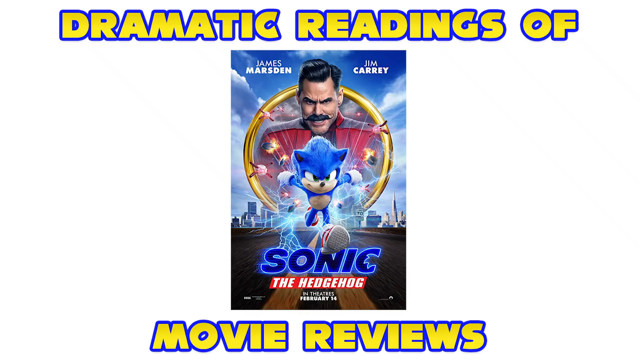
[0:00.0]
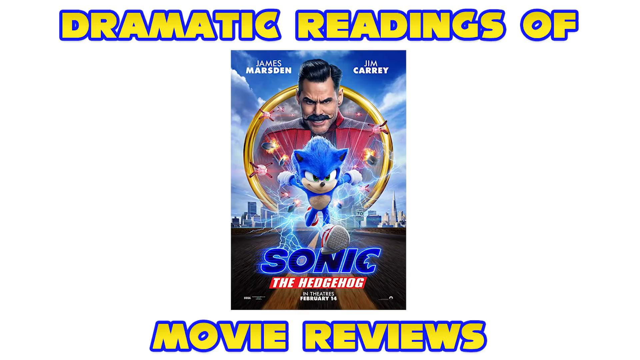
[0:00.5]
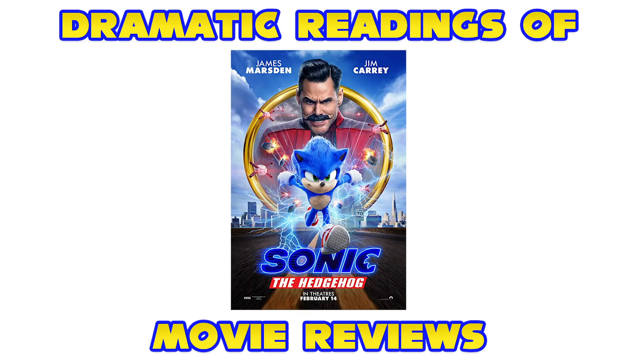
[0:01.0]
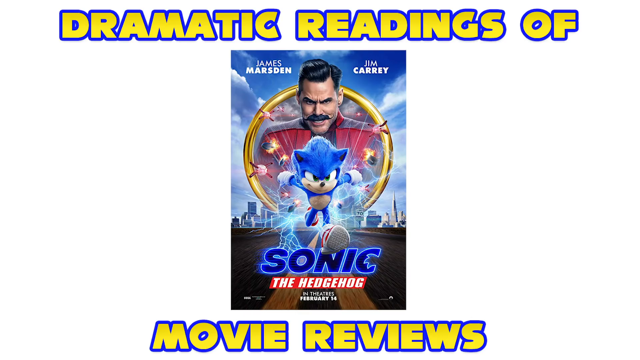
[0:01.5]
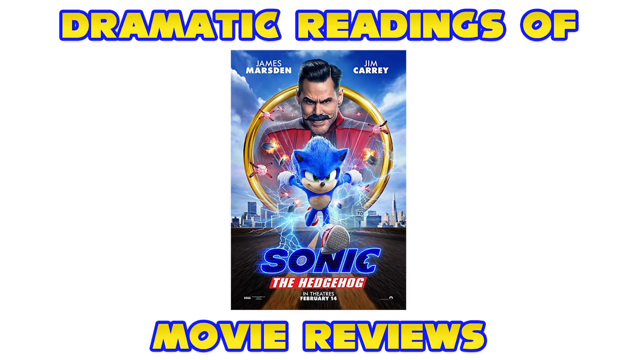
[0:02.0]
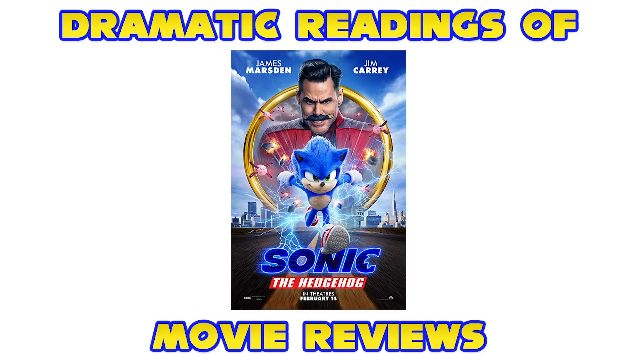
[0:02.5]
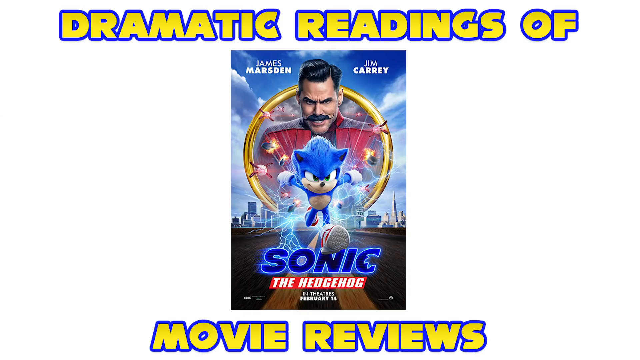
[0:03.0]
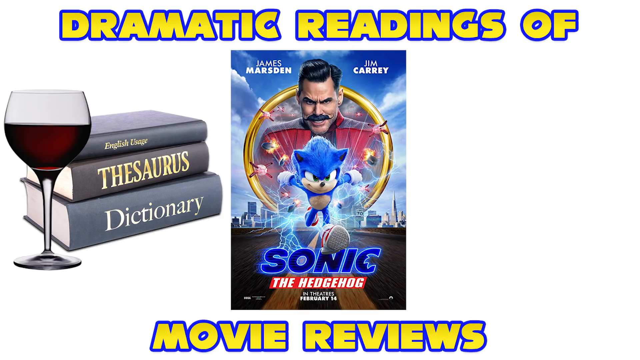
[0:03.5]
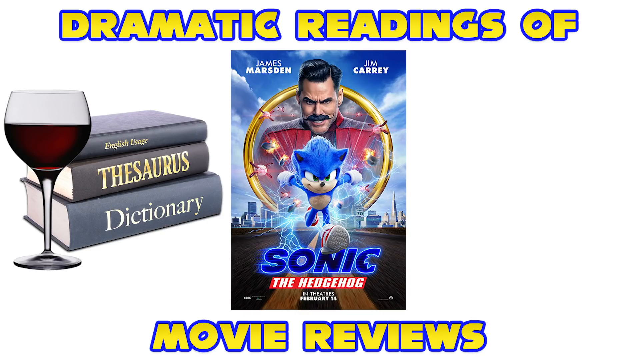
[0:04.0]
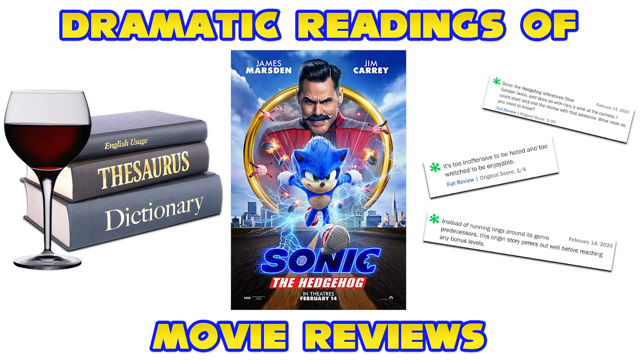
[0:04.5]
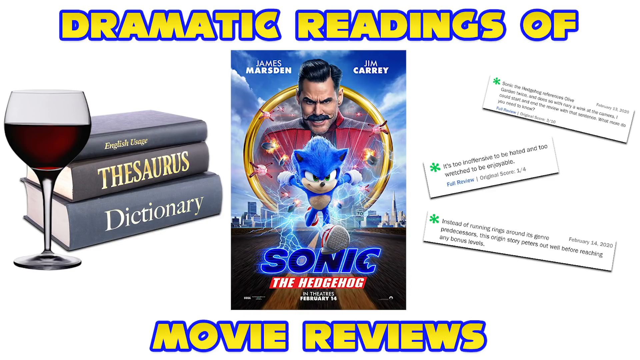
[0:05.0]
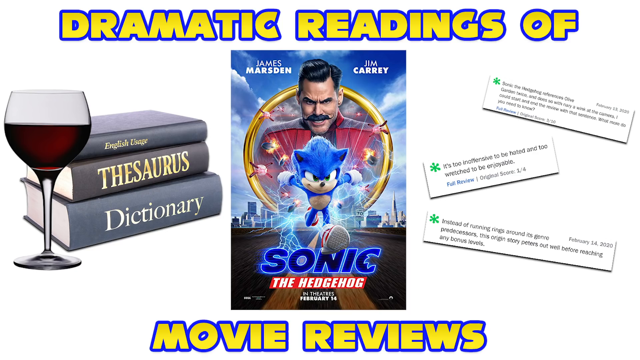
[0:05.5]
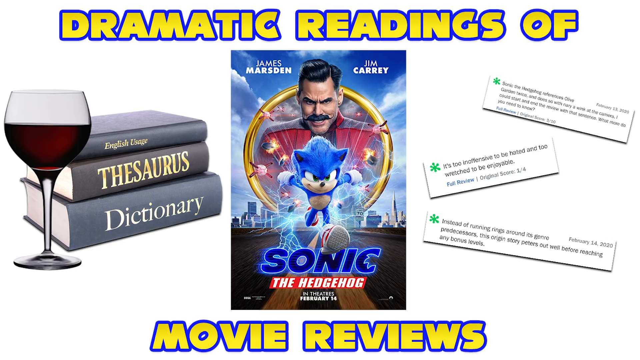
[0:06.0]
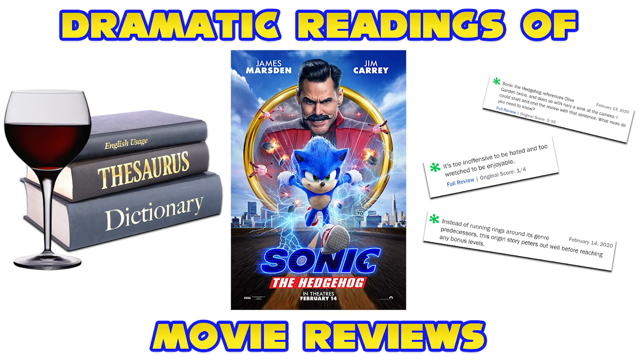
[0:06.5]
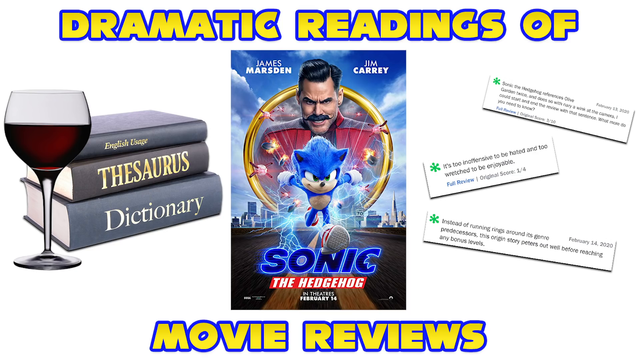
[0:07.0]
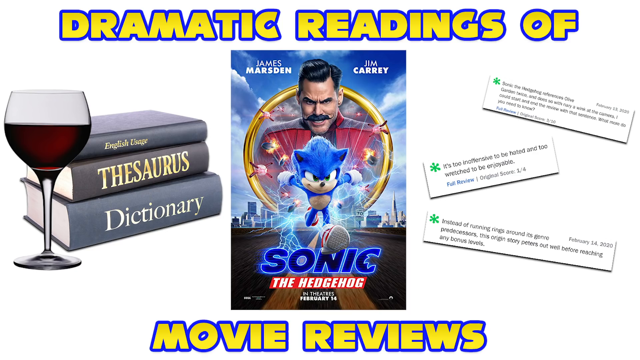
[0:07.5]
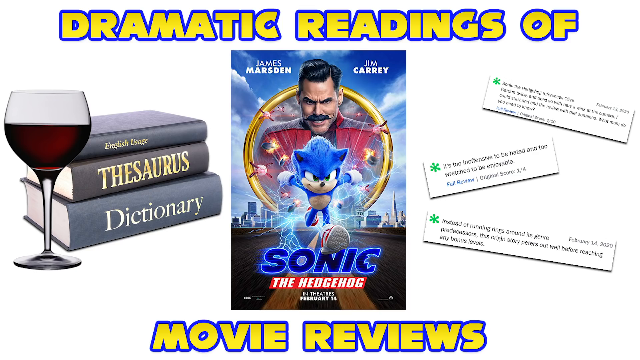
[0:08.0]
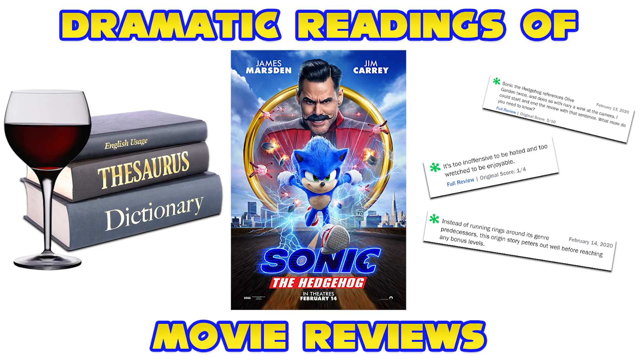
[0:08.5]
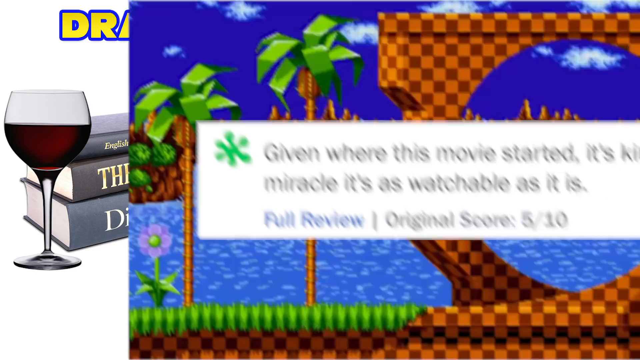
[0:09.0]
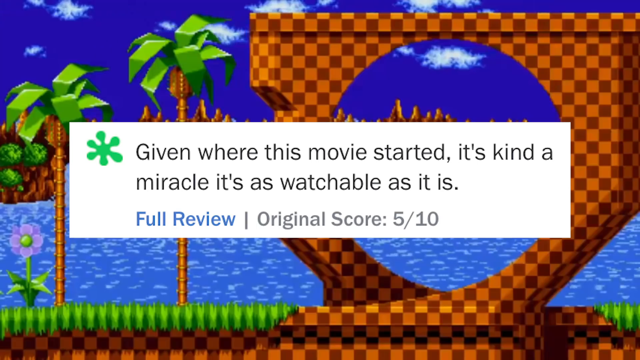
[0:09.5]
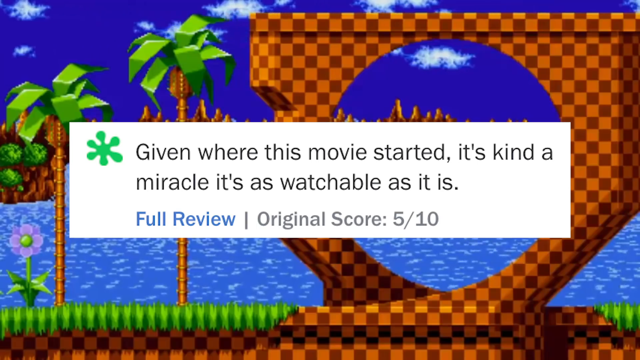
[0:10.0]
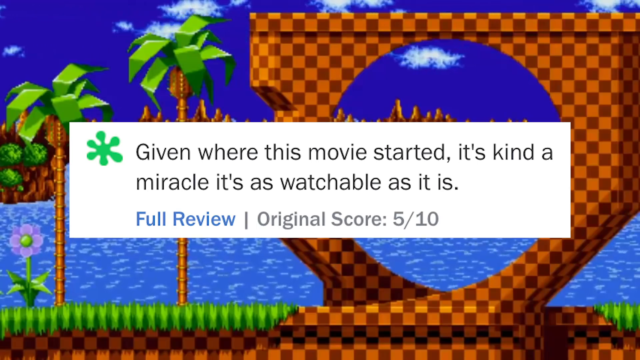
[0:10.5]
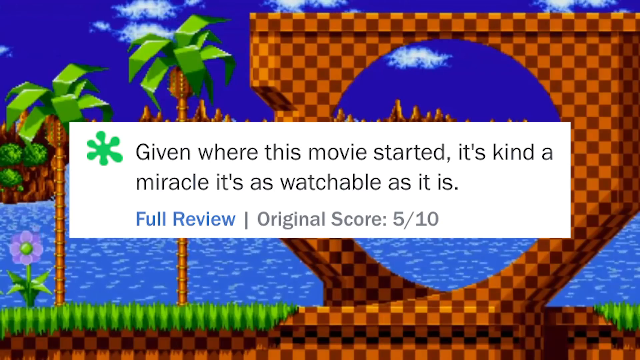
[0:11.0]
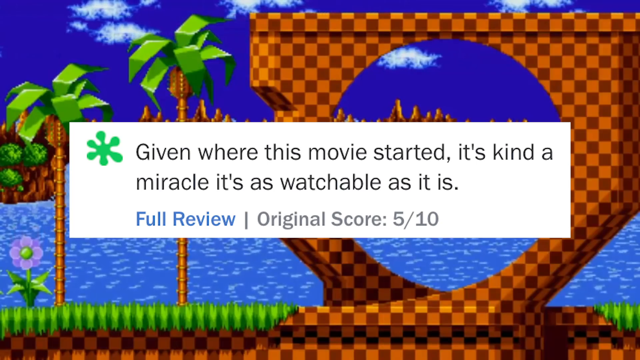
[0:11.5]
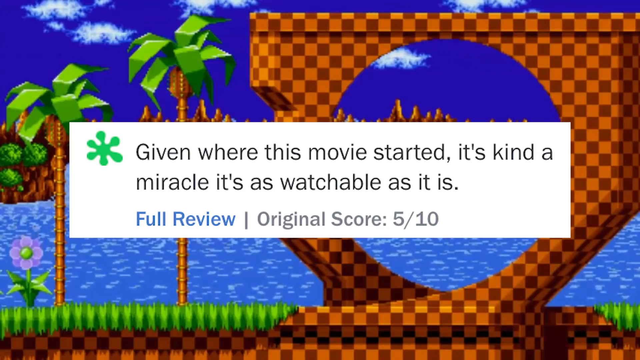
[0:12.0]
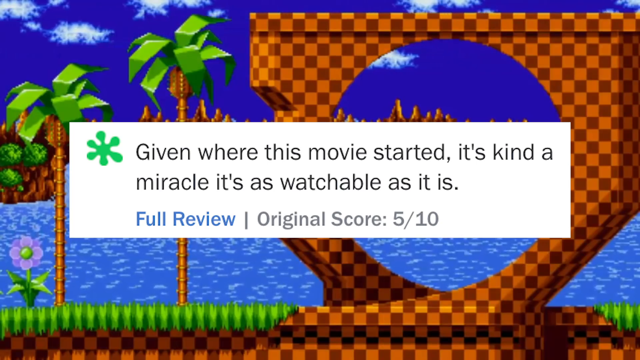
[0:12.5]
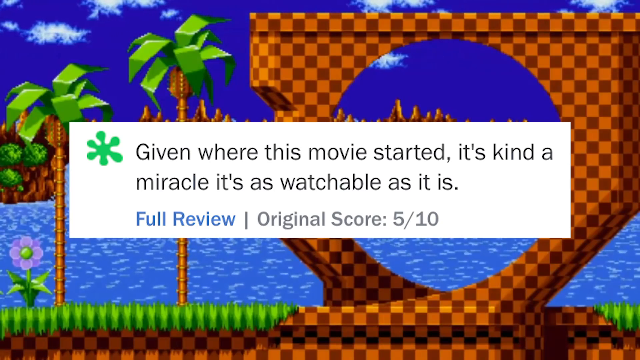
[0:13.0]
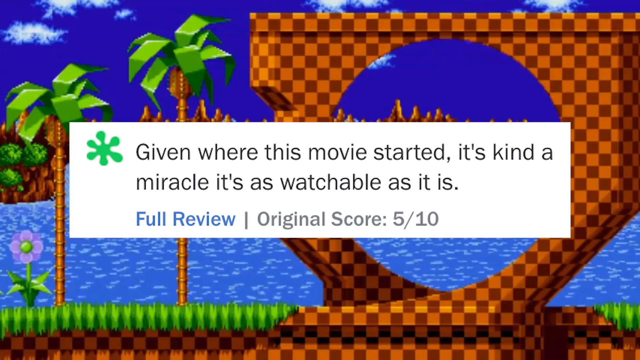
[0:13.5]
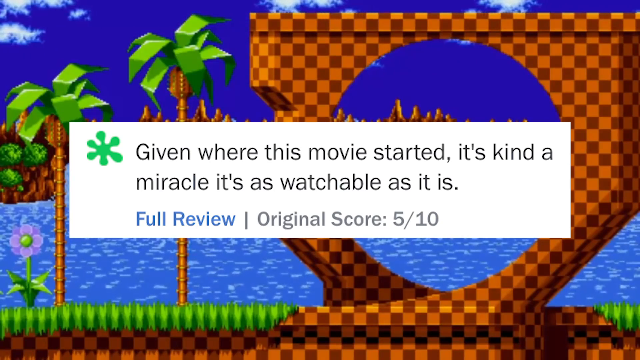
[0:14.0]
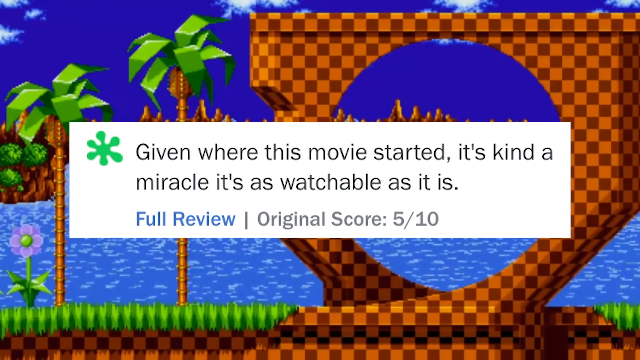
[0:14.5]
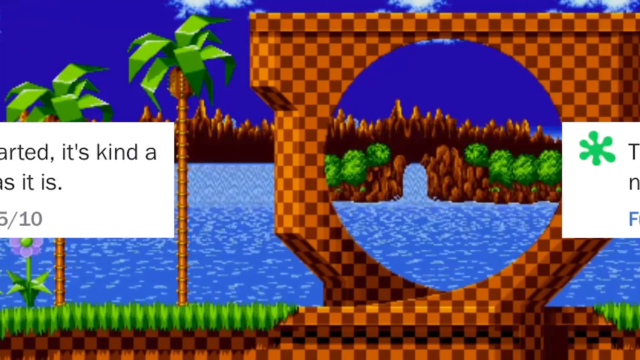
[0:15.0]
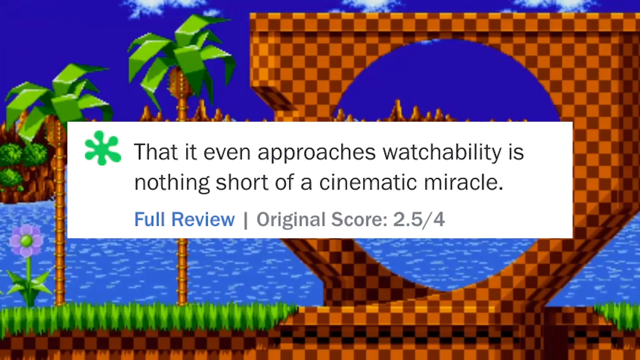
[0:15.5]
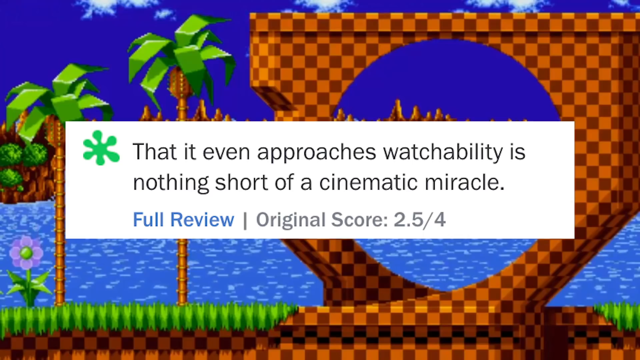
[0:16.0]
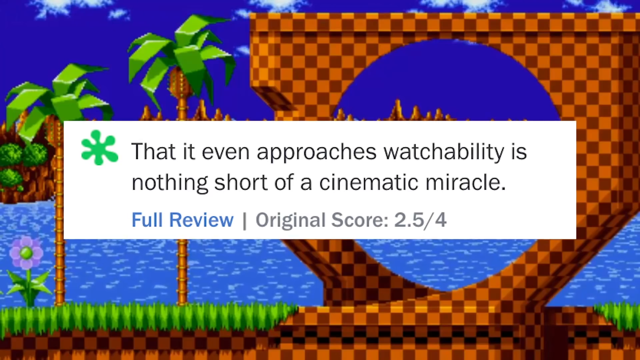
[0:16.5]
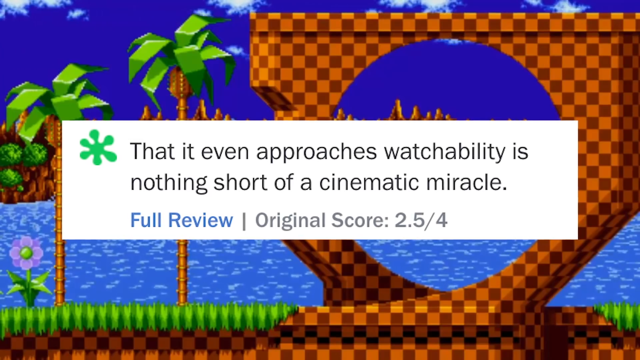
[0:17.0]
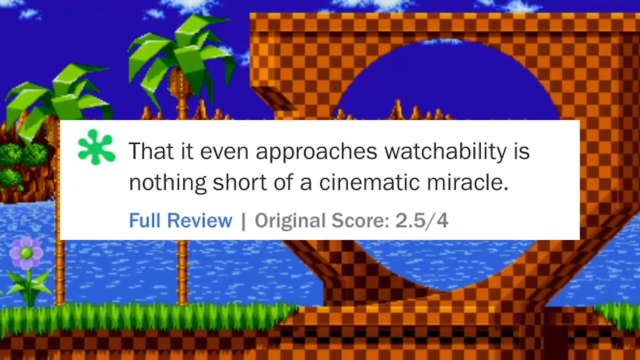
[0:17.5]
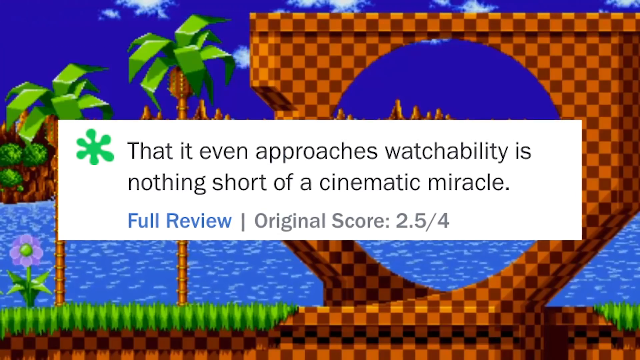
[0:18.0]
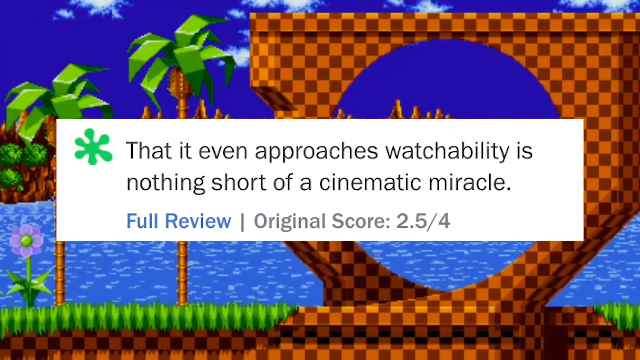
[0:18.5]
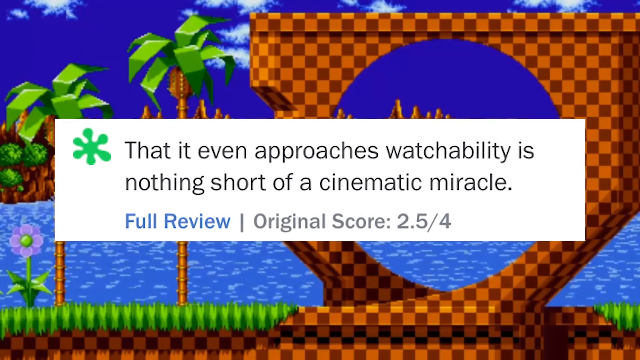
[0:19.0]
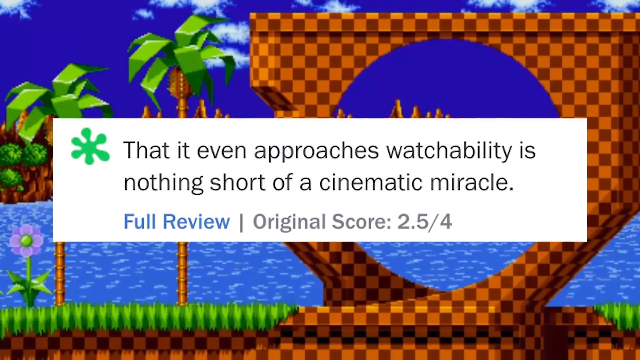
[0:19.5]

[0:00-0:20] The video is titled Dramatic Readings of Movie Reviews and looks at Sonic the Hedgehog, starring James Marsden and Jim Carrey. It opens on an image of the main movie poster, which shows Sonic the Hedgehog, a blue creature, running along a highway with Jim Carrey stood behind him; Jim Carrey has a big black moustache. Also in the image are a glass of red wine, a dictionary, a thesaurus and an English usage book. A quick couple of reviews follow. One says "it's too offensive to be hated and too wretched to be enjoyable." Another says "instead of running rings around its genre predecessors, this origin story peters out well before reaching any bonus levels." These reviews are from February 2020. The video then moves to an image that appears to be a sort of low-tech computer game, with lots of pixels showing palm trees, a riverside, flowers and blue skies. The next review says "given where this movie started, it's kind of a miracle, it's as watchable as it is" and gives a score of 5 out of 10. The background has some very basic animation: the clouds are moving and the flowers are swaying. The next review states that "it even approaches watchability, is nothing short of a cinematic miracle," with a score of 2.5 out of 4.